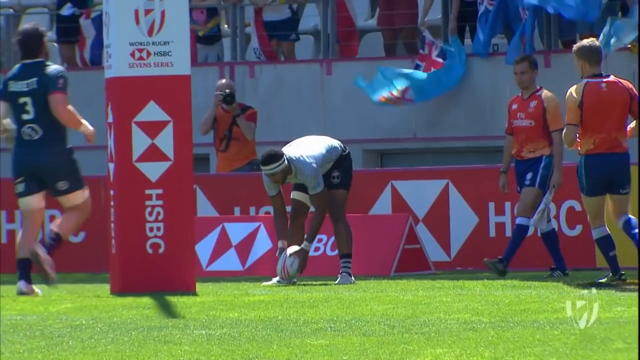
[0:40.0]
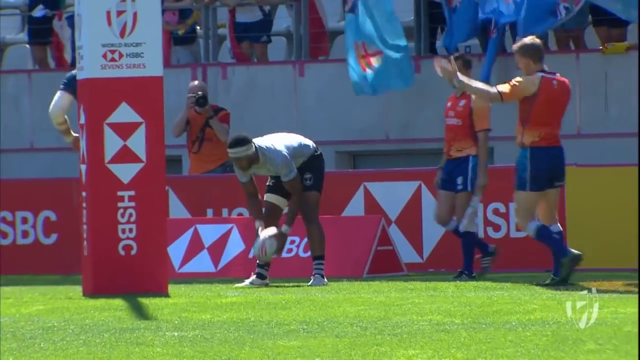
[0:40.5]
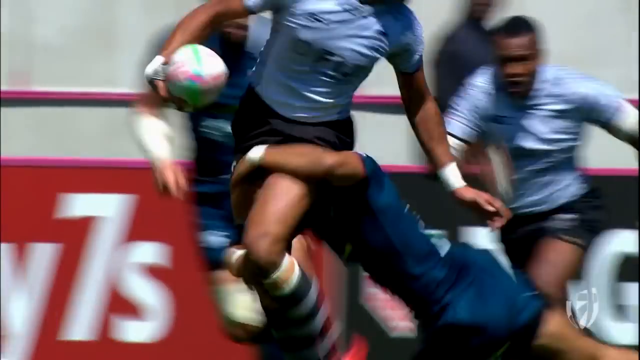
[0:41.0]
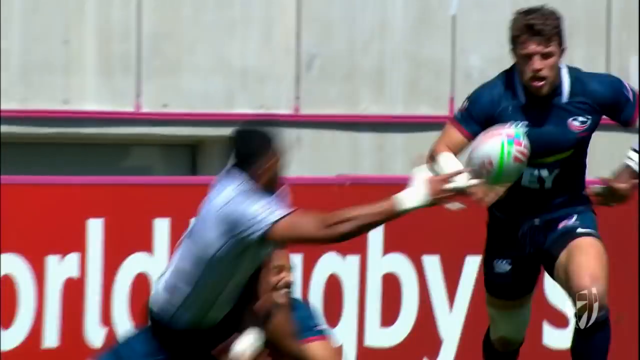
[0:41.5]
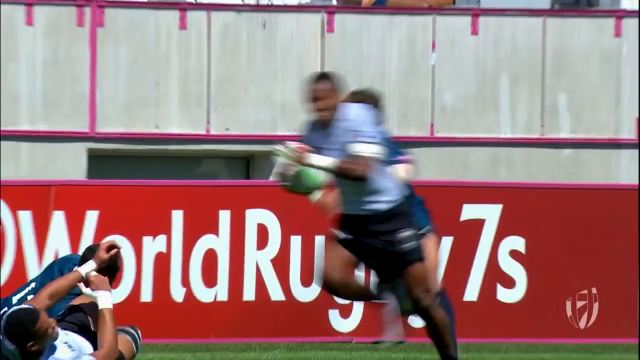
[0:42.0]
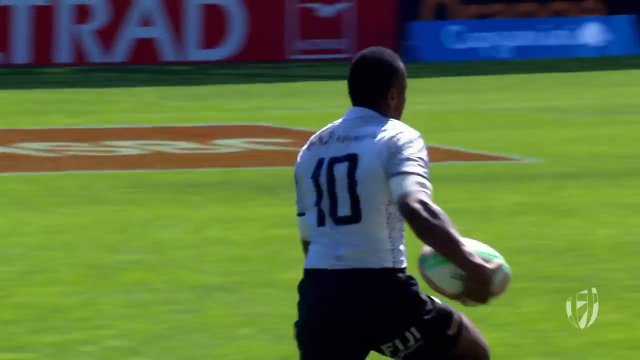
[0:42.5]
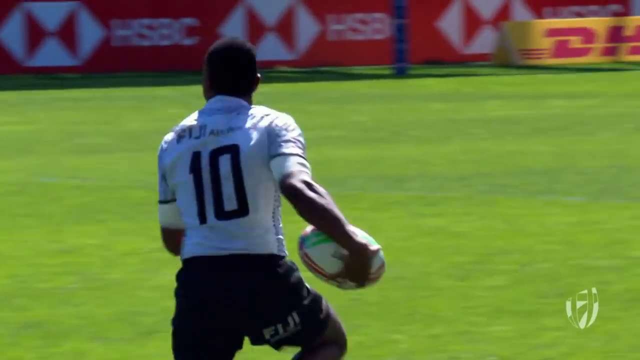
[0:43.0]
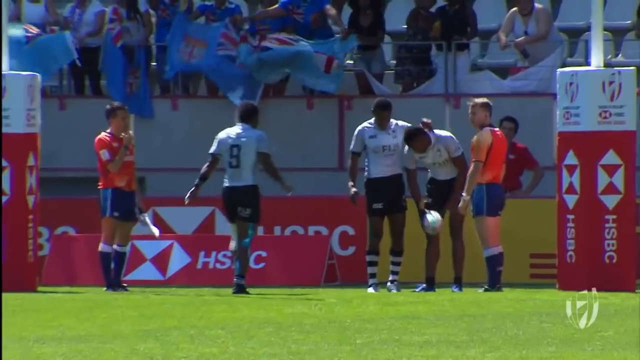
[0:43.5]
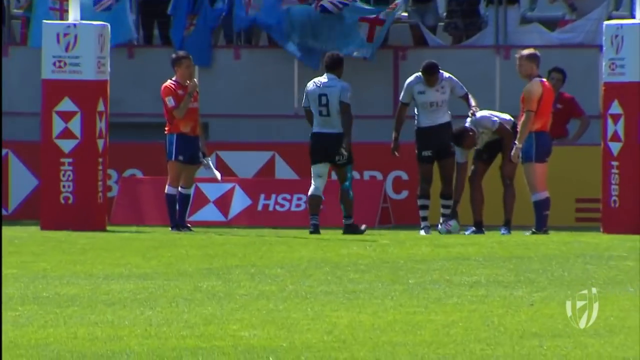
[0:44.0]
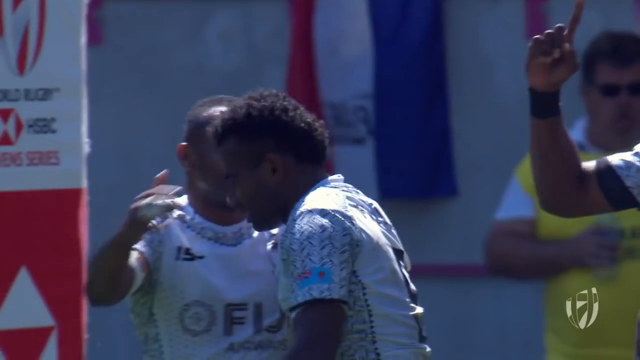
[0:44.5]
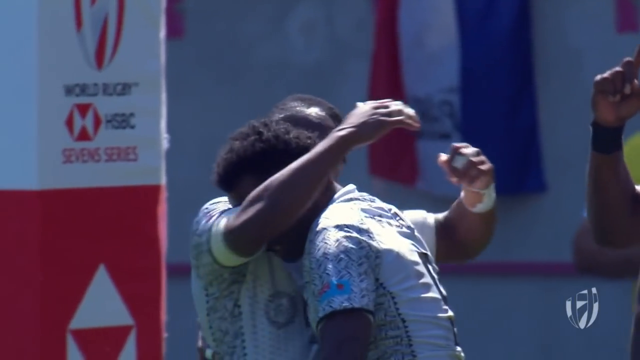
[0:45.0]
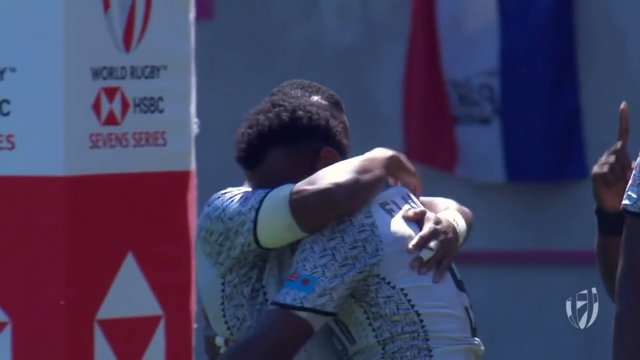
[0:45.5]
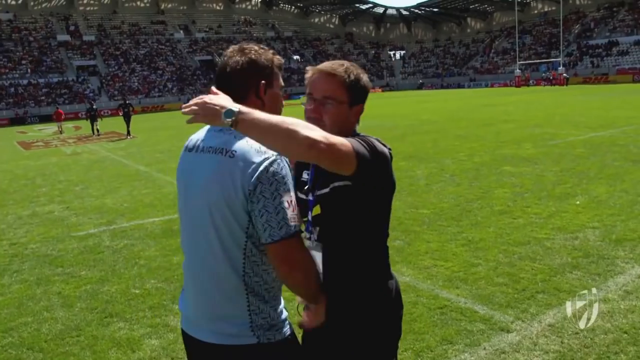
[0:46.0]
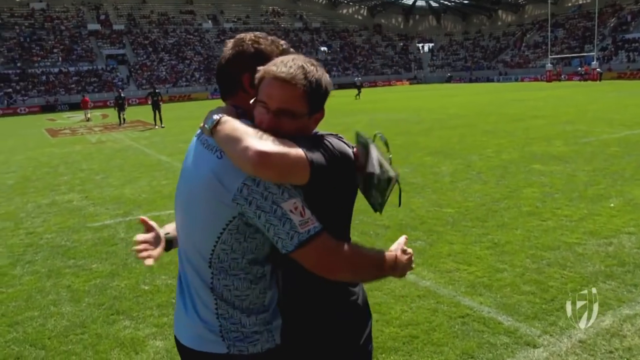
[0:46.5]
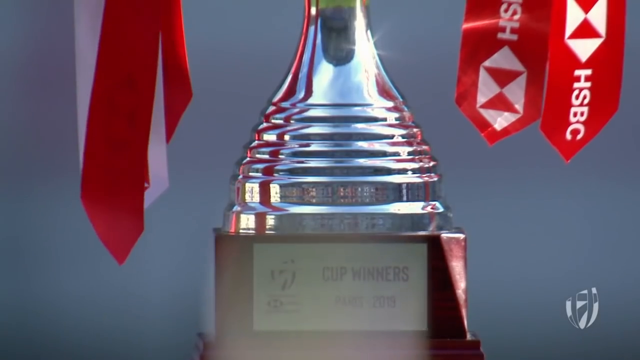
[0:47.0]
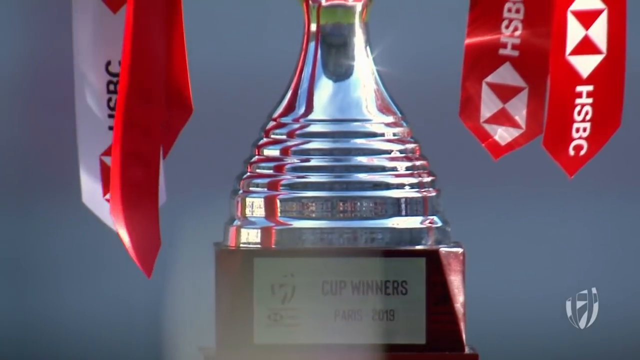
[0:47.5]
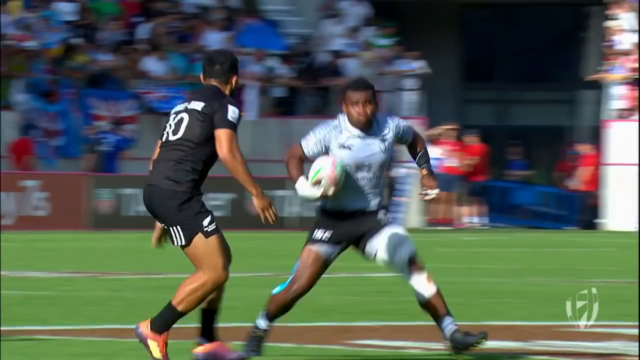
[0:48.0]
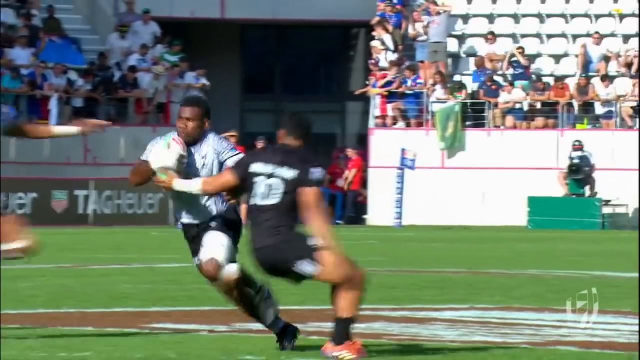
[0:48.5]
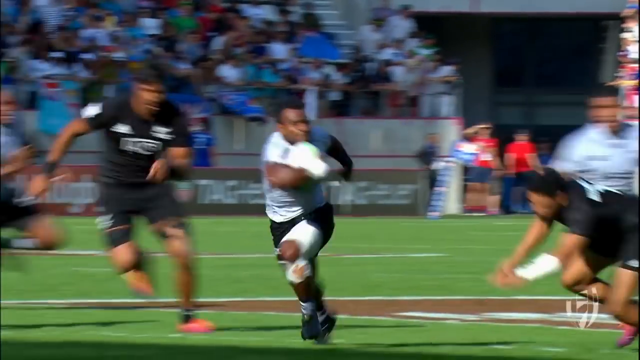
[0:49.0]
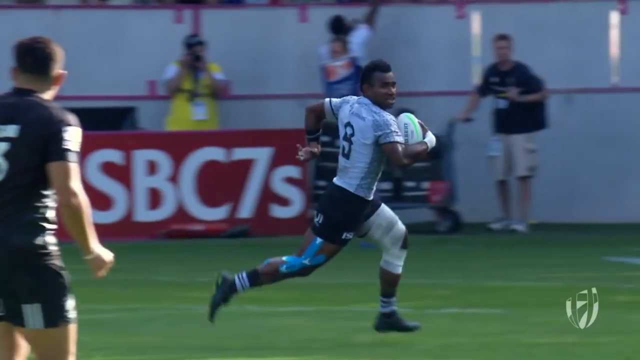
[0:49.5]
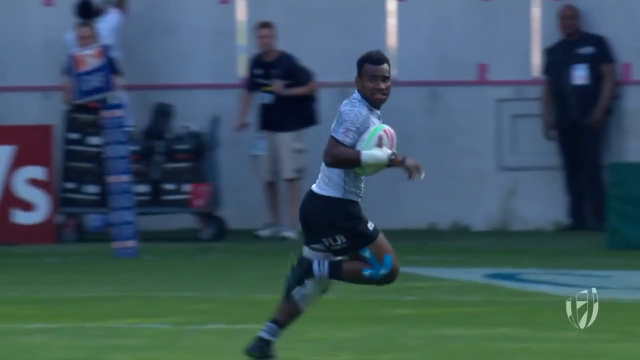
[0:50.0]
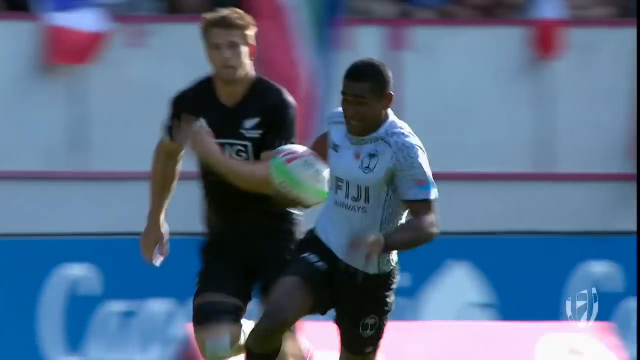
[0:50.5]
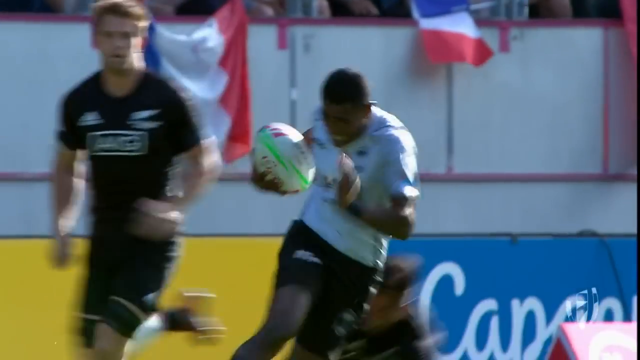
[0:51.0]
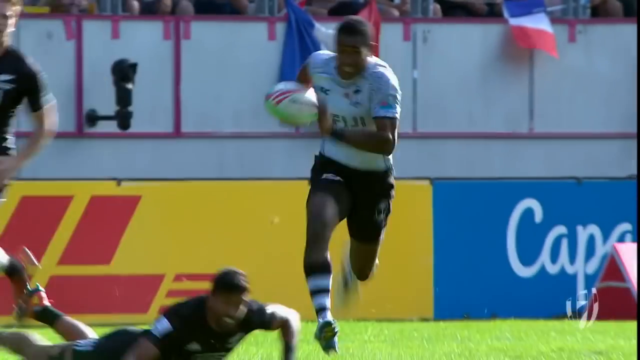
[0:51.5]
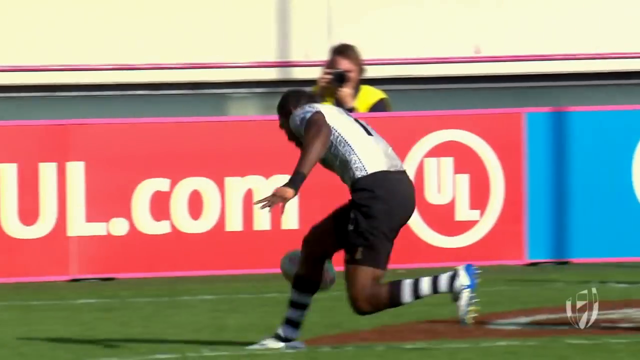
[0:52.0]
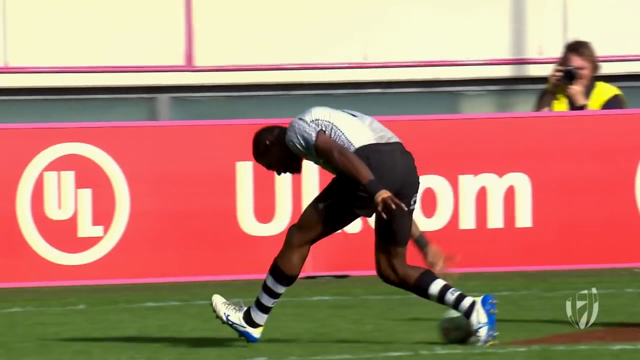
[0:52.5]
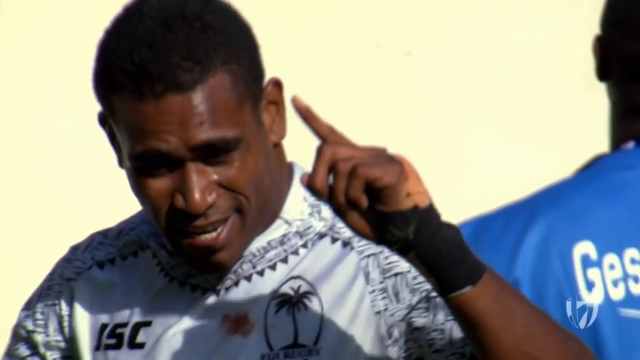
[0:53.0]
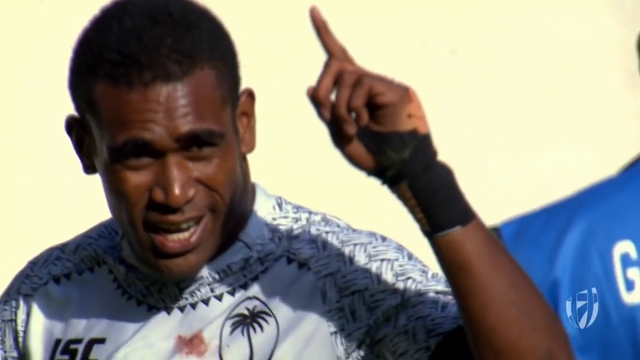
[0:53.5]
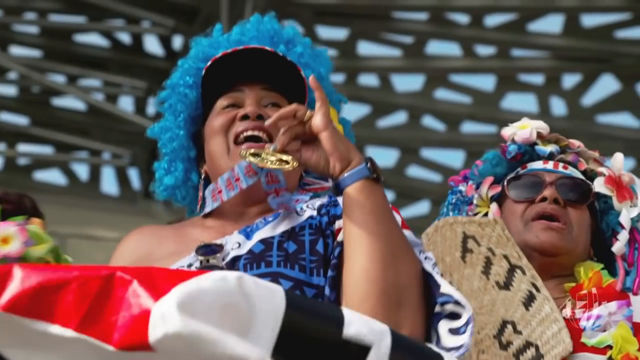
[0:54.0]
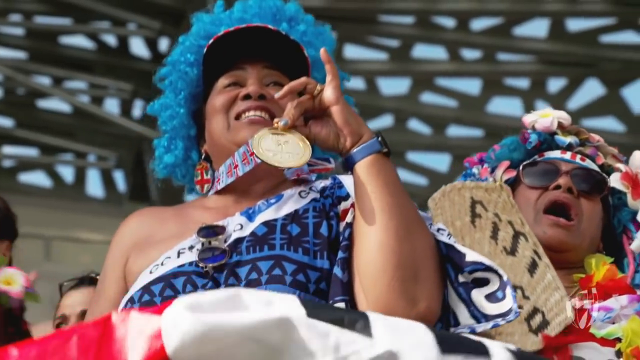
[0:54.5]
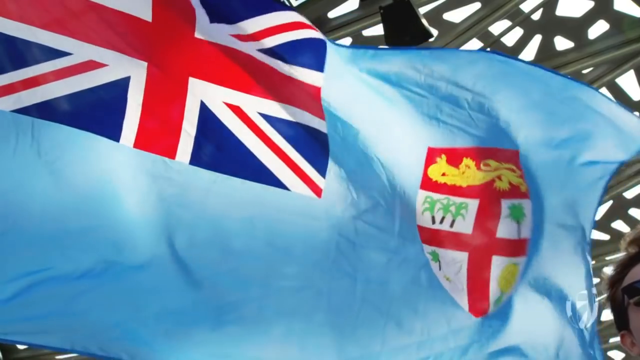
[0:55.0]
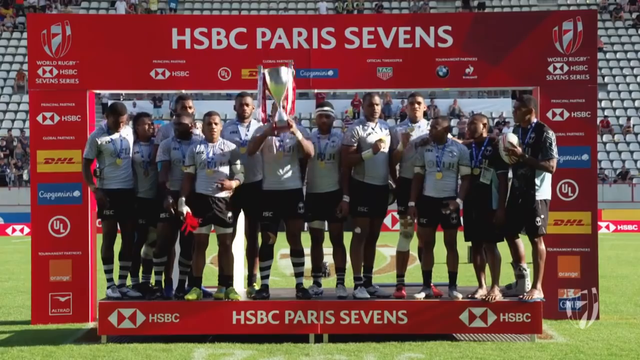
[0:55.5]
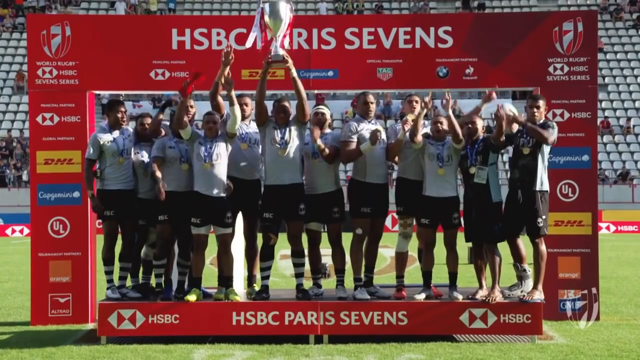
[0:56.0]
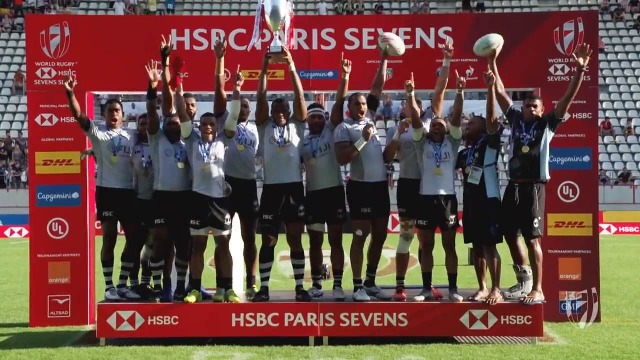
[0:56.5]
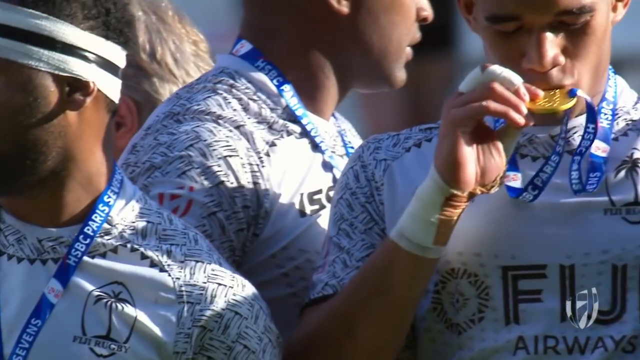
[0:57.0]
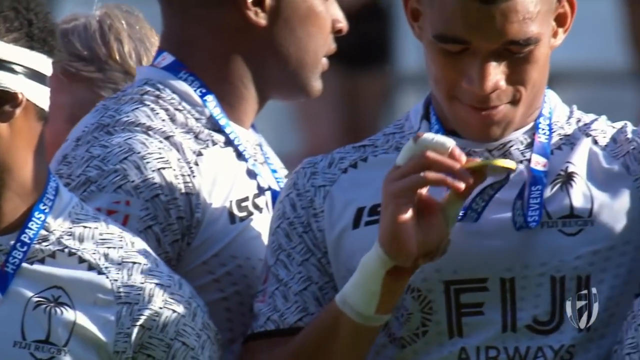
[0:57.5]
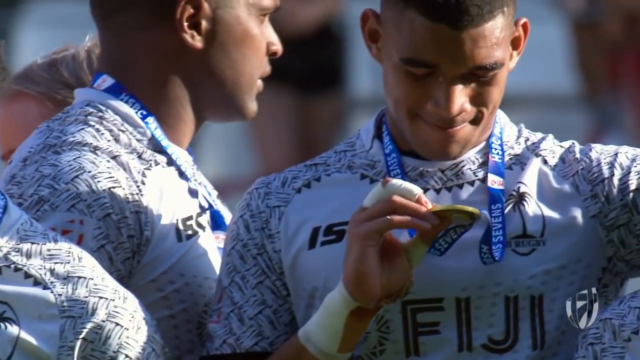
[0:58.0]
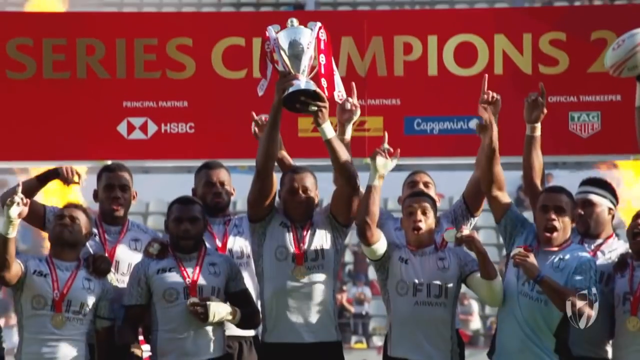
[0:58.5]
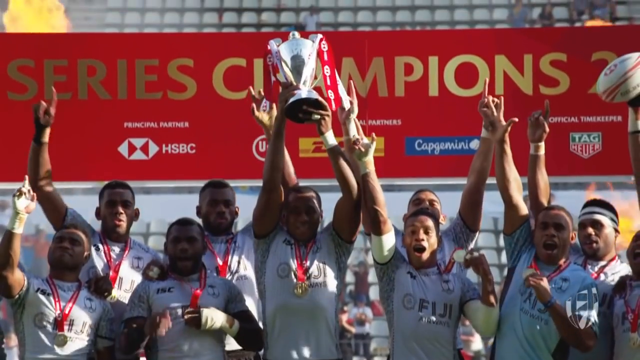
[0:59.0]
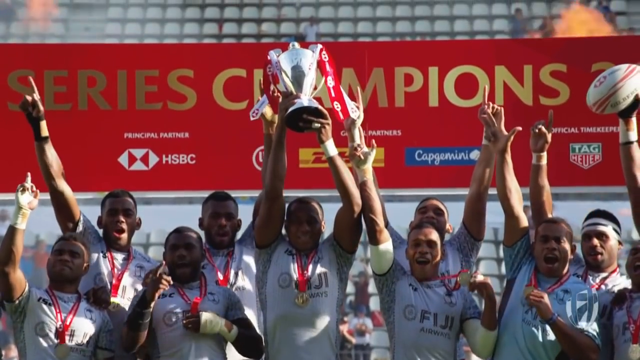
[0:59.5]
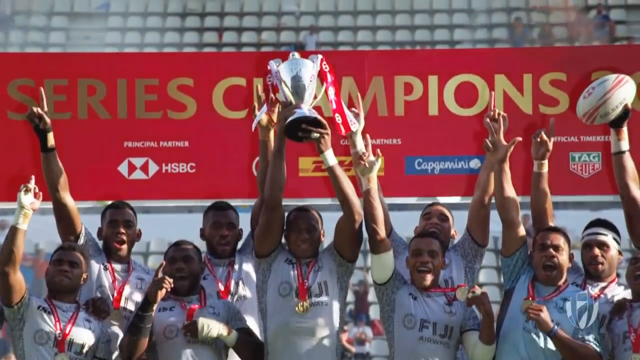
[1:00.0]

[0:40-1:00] The shots continue with lots of hugging, and players scoring are shown both at real speed and in slow motion. Crowd shots show people excited and celebrating. Among the cheering crowd are two women from Fiji dressed in native attire, very heavily dressed in very colorful Fijian outfits; one of them has a gold medal around her neck. A light blue flag appears, with a British flag in the upper right corner and a red shield on the right. A group or team holds up a trophy over their heads beneath a red banner that extends down each side, with a red column on the left and right, reading "HSBC Paris sevens" in white all caps; the squared-off red arch carries lots of logos. A close-up shows someone kissing a gold medal, and then they hold up the sign in front of a different sign, a red banner reading "series champions" in gold.